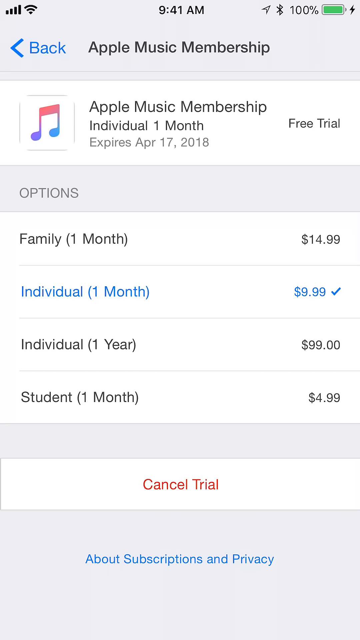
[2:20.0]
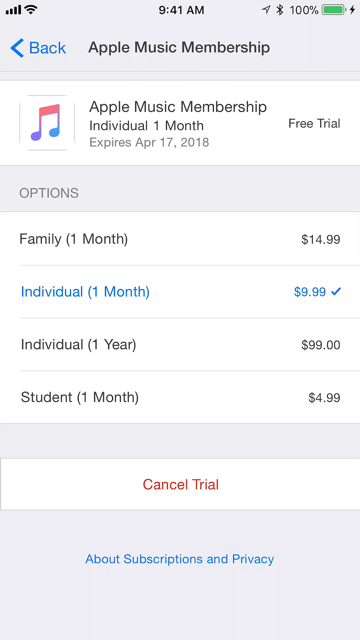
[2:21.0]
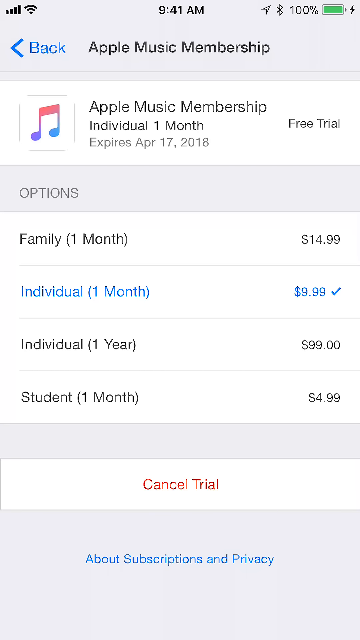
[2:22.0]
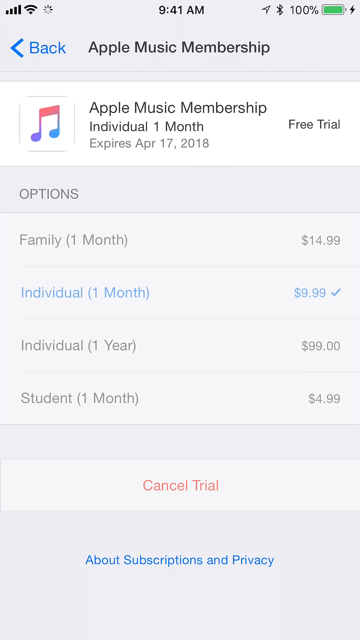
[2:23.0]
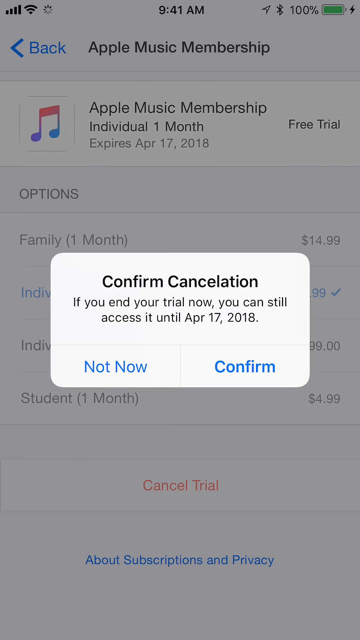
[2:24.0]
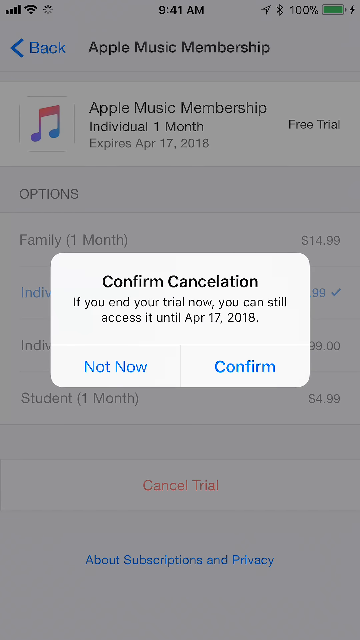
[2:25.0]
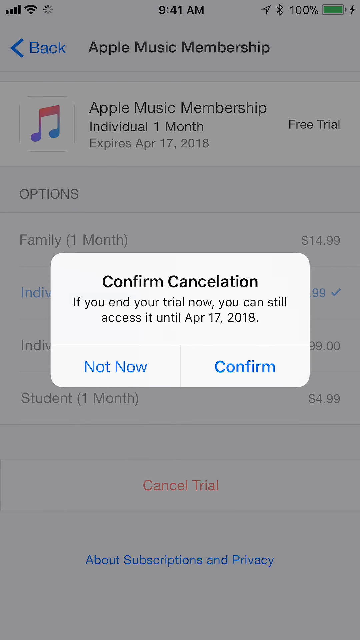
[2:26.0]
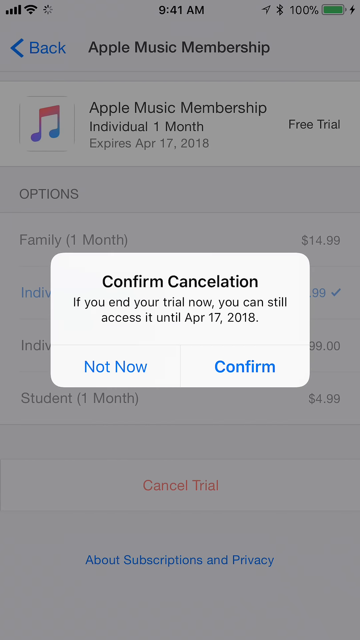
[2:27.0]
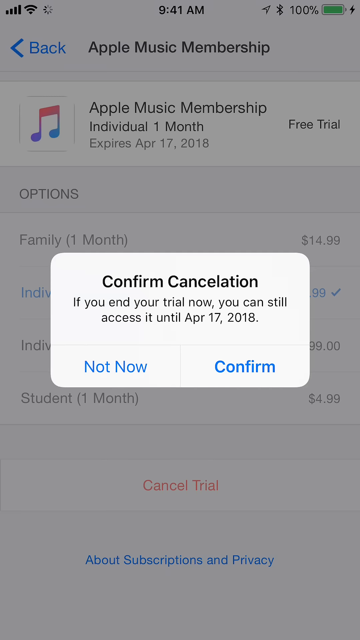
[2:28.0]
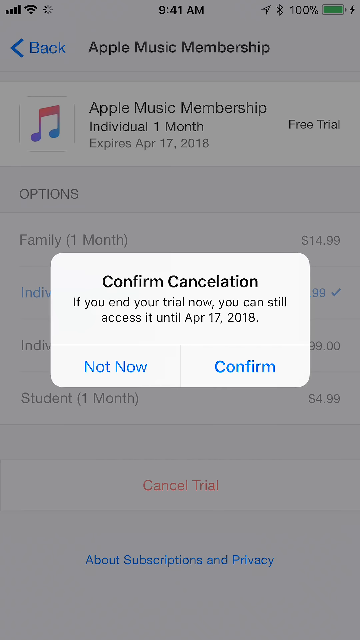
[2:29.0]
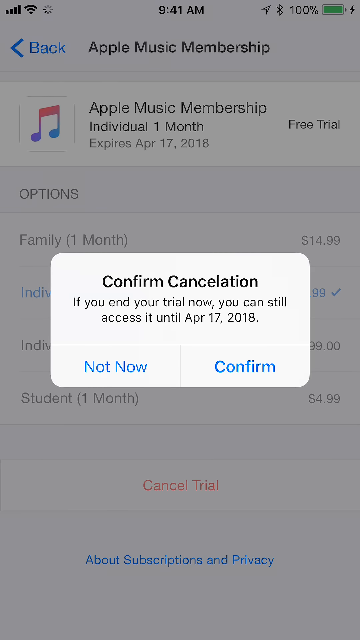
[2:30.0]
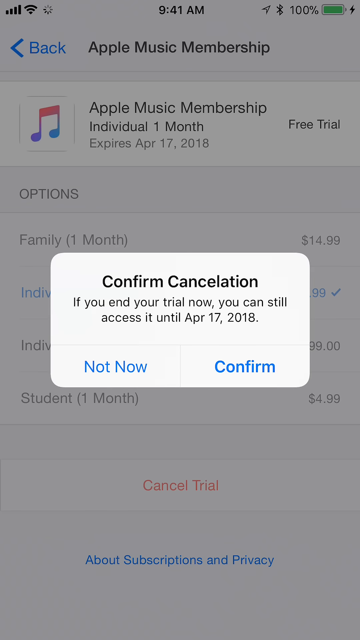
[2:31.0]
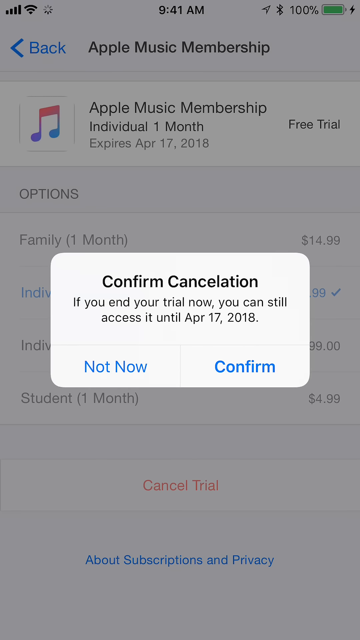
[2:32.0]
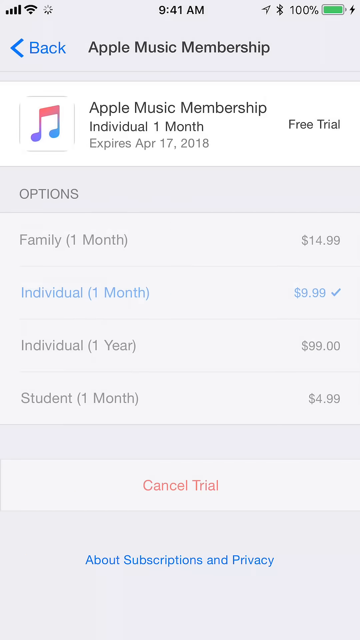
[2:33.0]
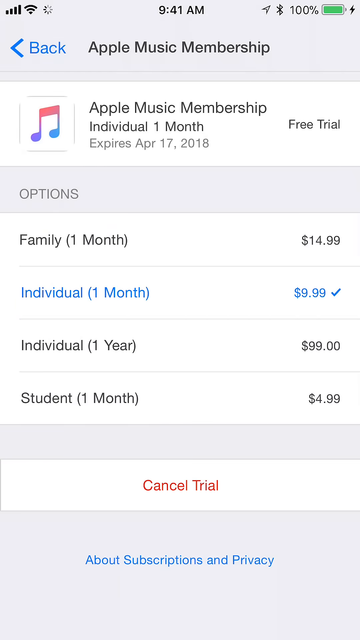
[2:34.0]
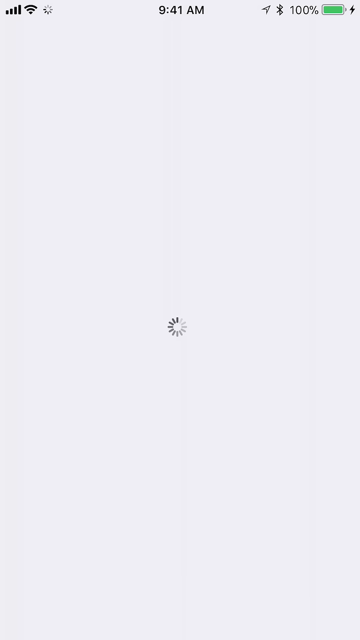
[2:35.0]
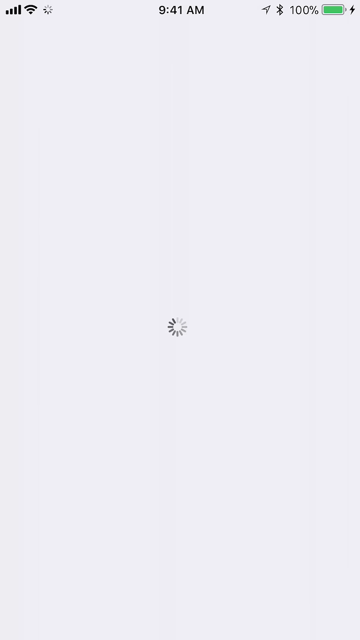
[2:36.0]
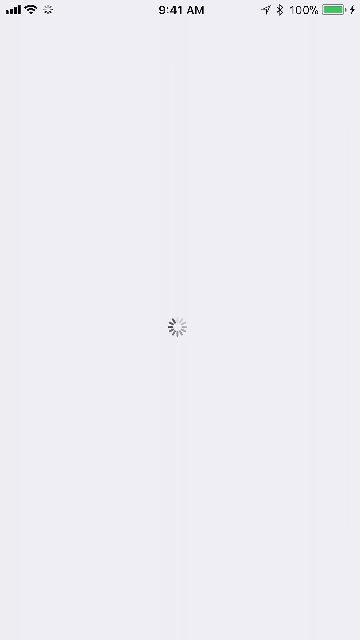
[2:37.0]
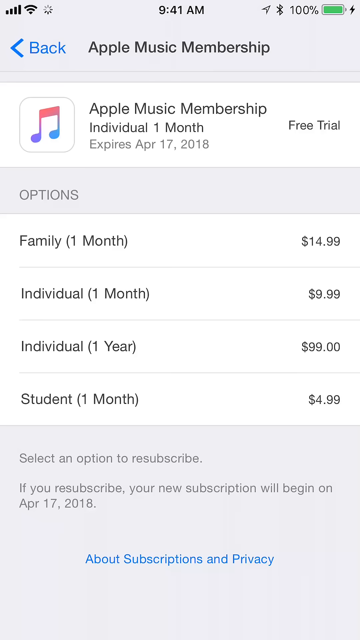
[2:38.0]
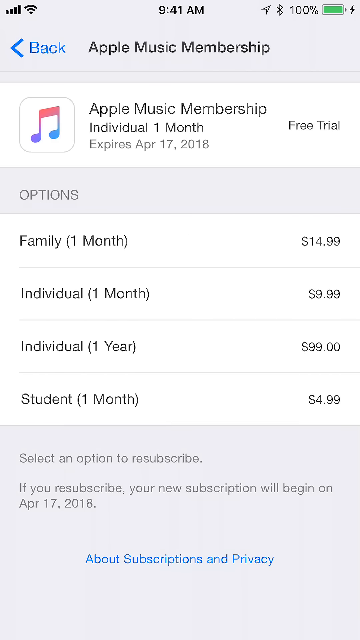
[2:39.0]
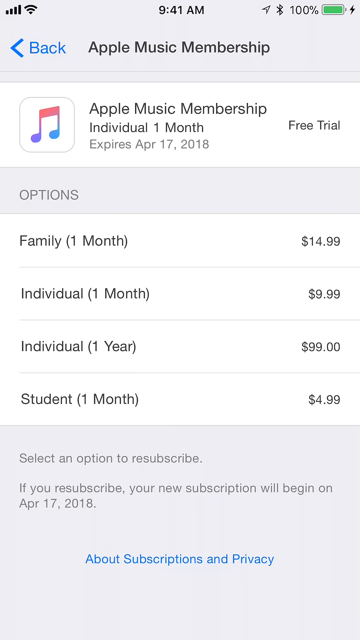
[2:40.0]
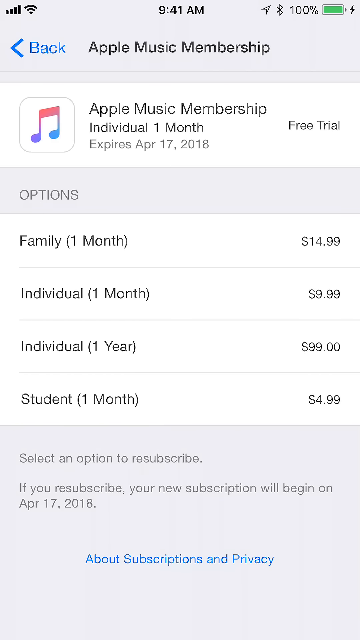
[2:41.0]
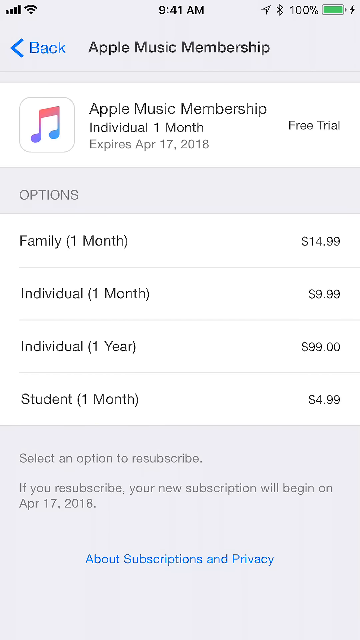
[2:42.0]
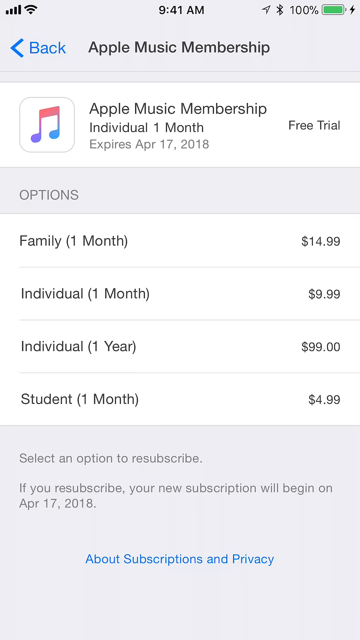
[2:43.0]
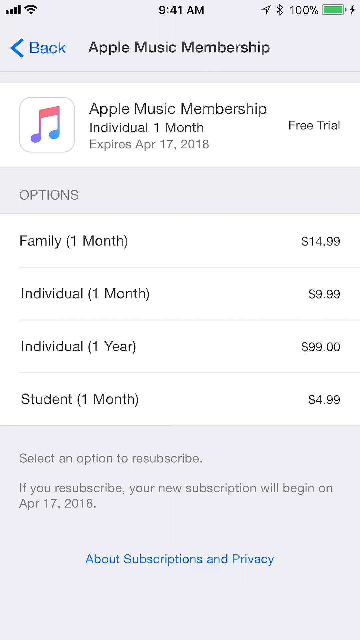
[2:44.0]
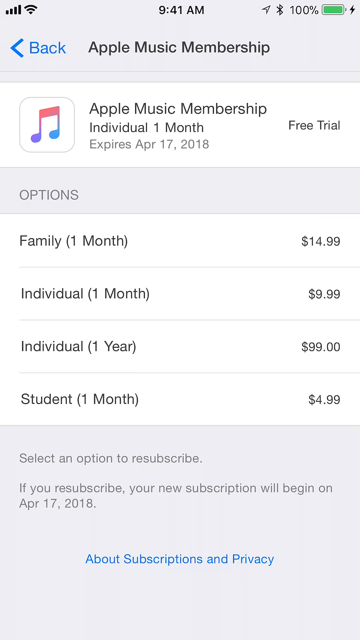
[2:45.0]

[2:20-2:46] An iPhone screen has the header "Apple Music Membership" in black text at the top, with a menu underneath that says "options" and a whole bunch of plans to select from. Before the box appears, blue highlighted text in the options says "individual account", which seems to be the selected plan. In the forefront is a white box with black text that says "confirm cancellation. If you end your trial now you can still access it until April 17, 2018". Beneath it is blue text, "not now" on the left and "confirm" on the right. The box disappears and a wheel turns clockwise, seeming to be thinking like a loading symbol; it then disappears and the Apple Music Membership screen appears. After it loads, the white box comes up again saying "confirm cancellation", apparently as the user tries to confirm the cancellation.